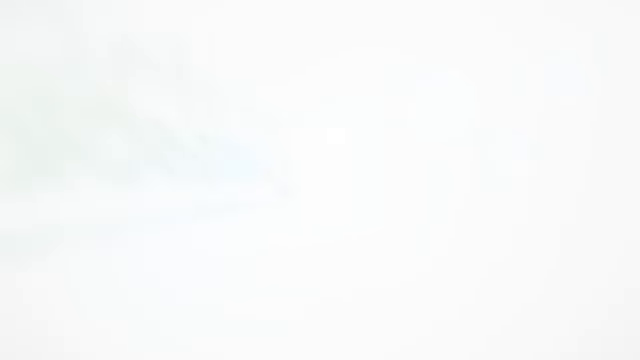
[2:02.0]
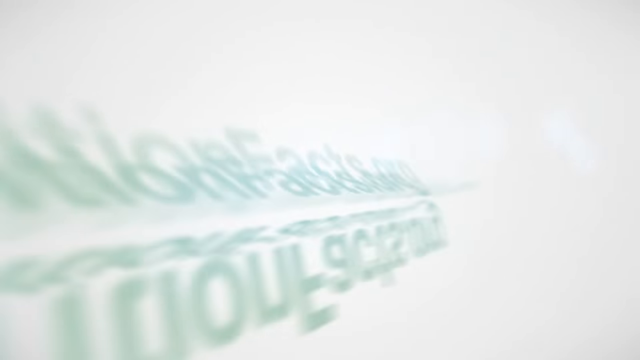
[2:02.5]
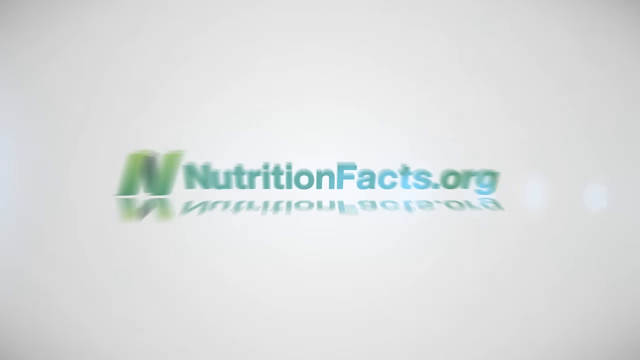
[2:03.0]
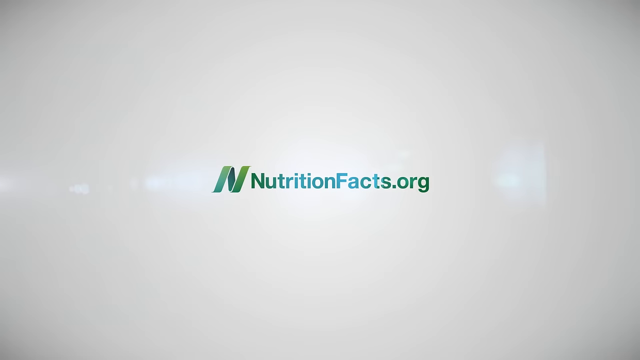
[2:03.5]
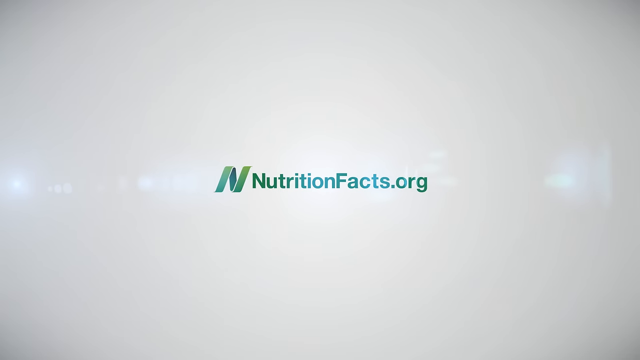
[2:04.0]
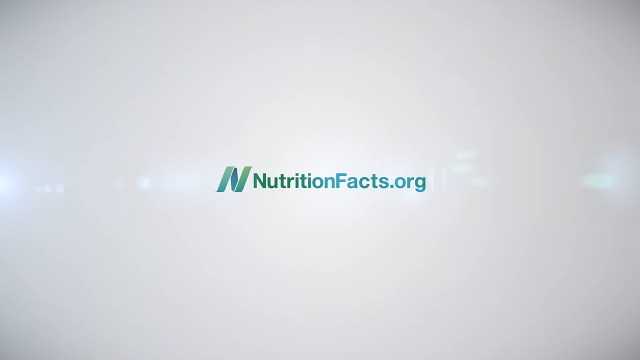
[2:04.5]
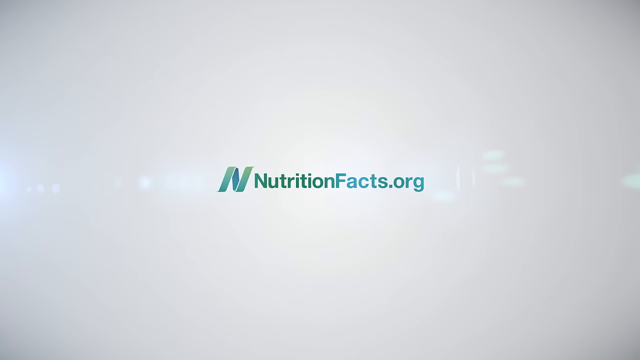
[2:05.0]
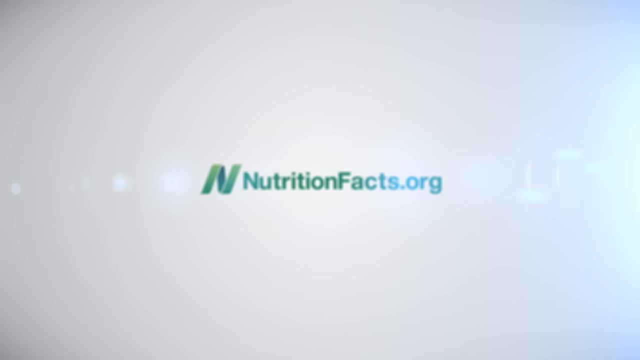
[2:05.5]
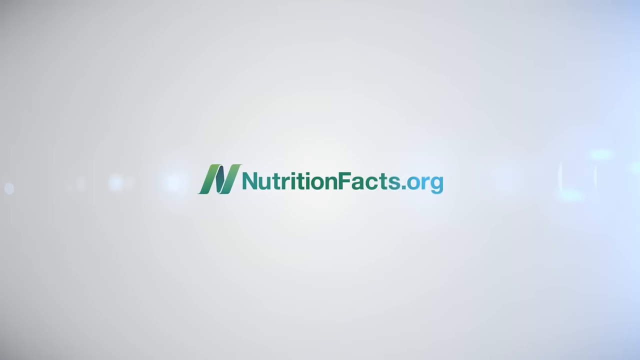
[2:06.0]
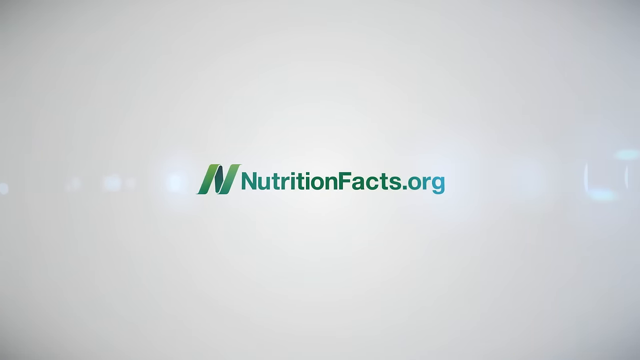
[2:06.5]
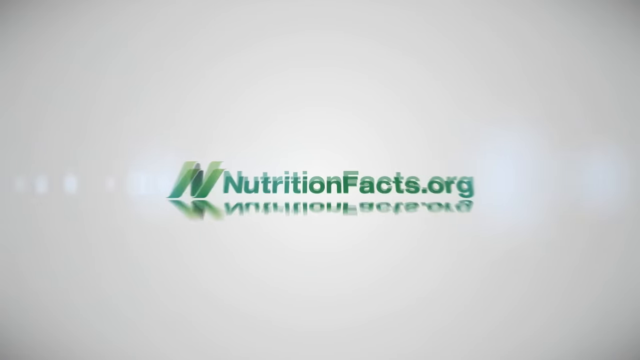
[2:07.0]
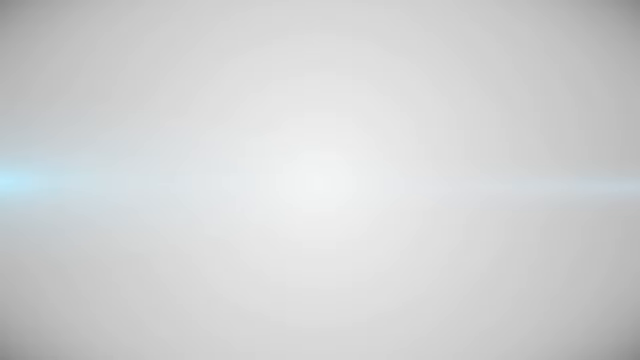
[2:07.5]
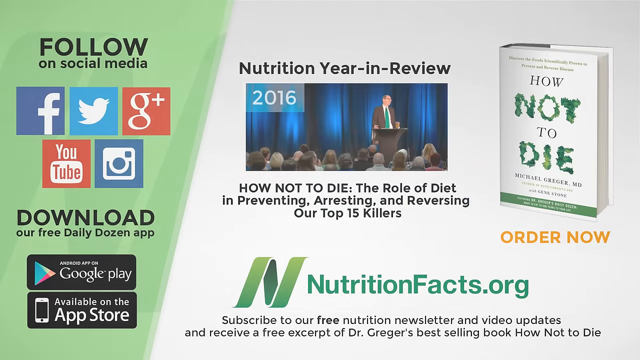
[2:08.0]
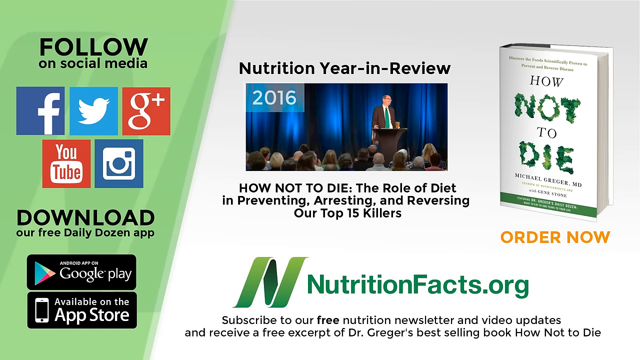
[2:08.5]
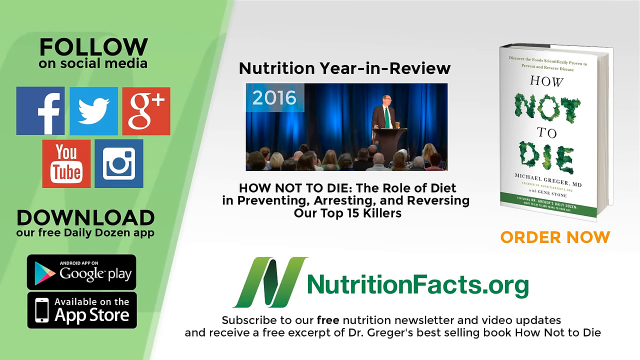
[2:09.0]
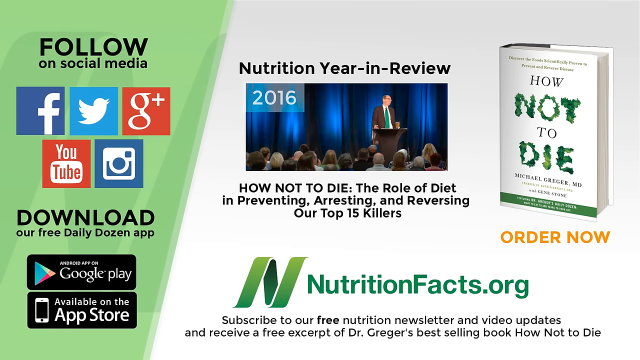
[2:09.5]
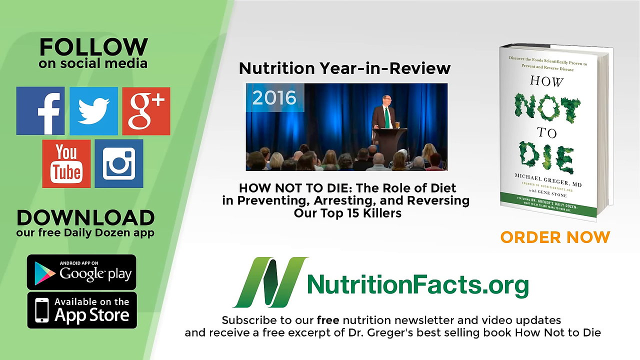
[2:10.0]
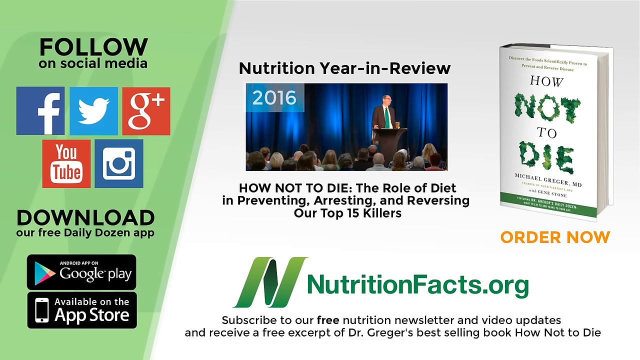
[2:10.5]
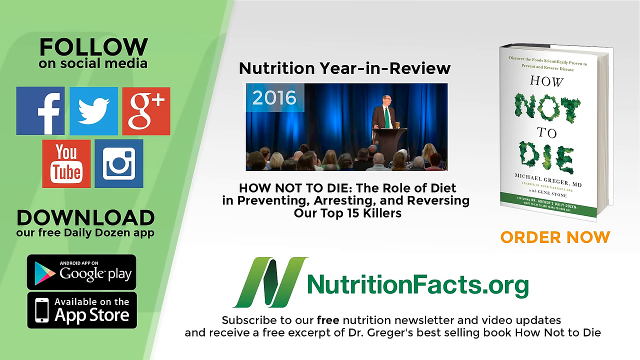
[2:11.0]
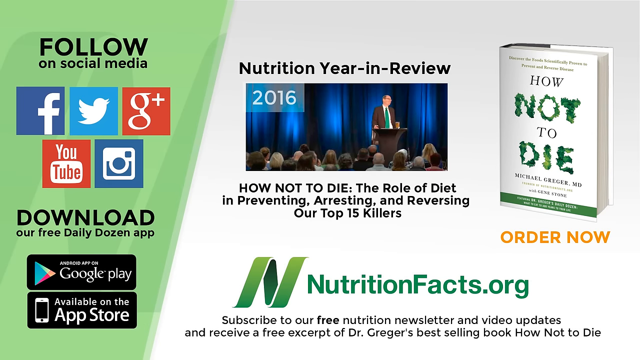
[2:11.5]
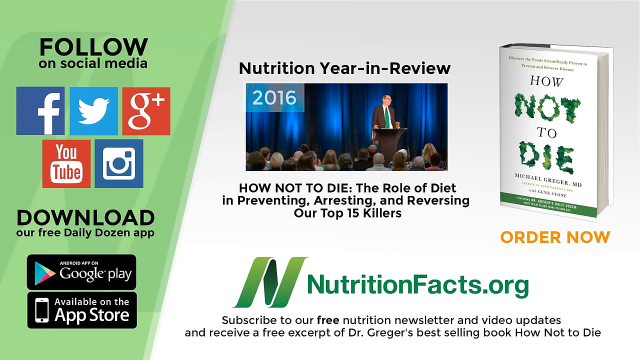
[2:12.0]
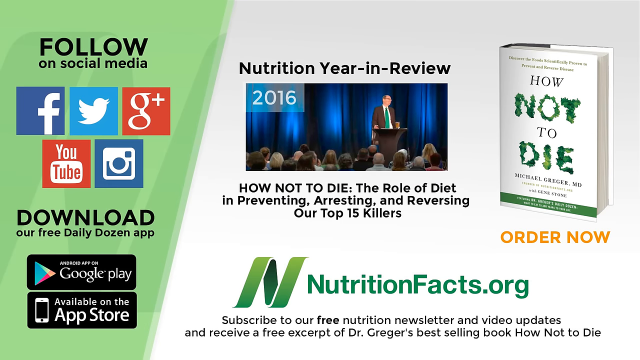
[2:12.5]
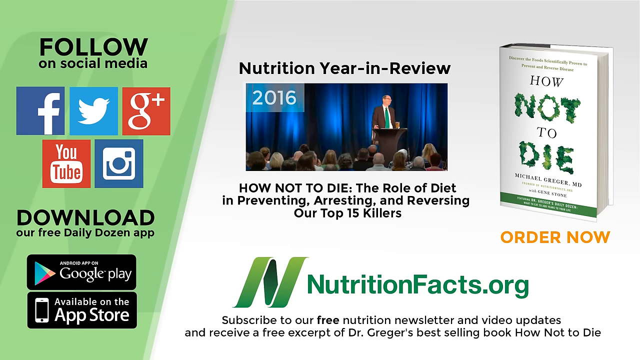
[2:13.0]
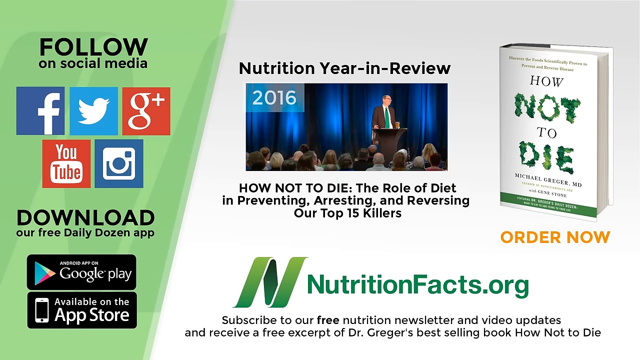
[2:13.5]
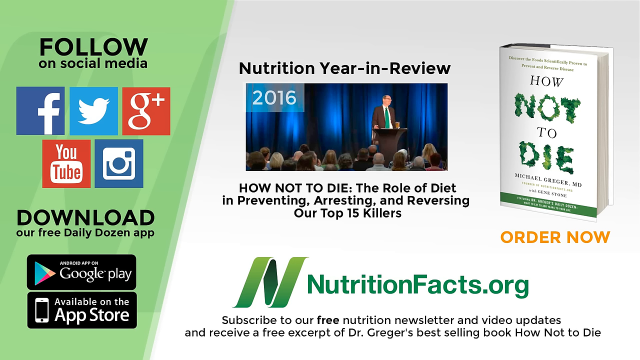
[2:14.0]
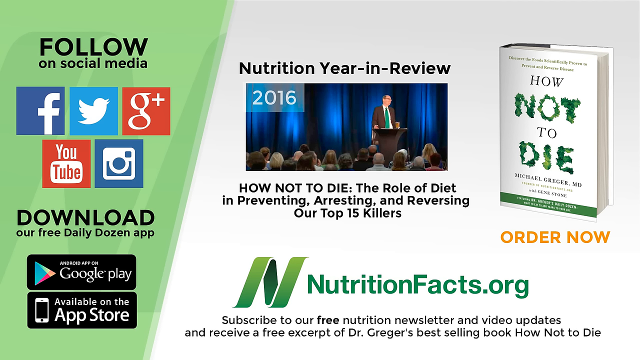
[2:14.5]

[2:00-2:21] A plain white screen is shown very quickly, and then a green logo flashes on the screen: an italic N with "nutritionfacts.org" next to it, all written in green in the center. After several seconds the logo flashes off, and the screen shows several things. In the center it says "nutrition year in review", and below that is a still image of a man dressed in a suit giving a presentation to a crowd. "2016" appears in the upper left-hand corner of the screen, and below that it reads "how not to die. The role of diet in preventing, arresting, and reversing our top 15 killers". At the bottom of the screen is "nutritionfacts.org" with the logo next to it. On the right-hand side is an image of a book named How Not to Die, with "order now" in orange letters below it. On the left-hand side, on a light green backdrop, it reads "follow on social media", followed by five different social media options. Below that it says "download our free Daily Dozen app", and below that are Google Play and App Store buttons.